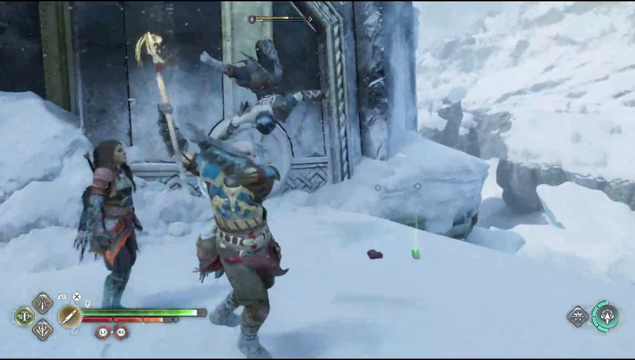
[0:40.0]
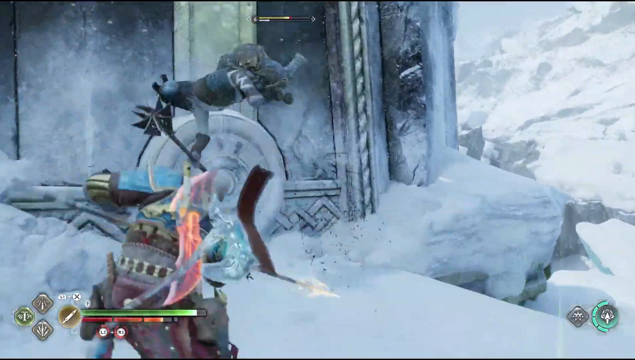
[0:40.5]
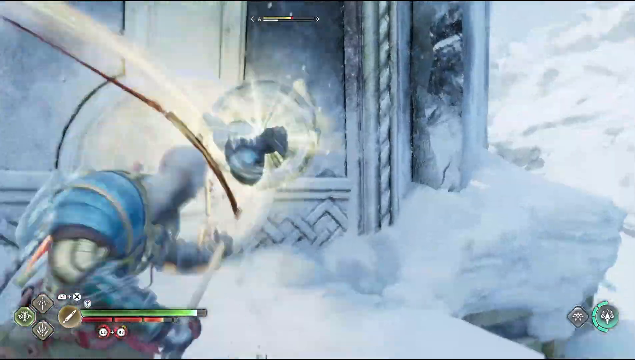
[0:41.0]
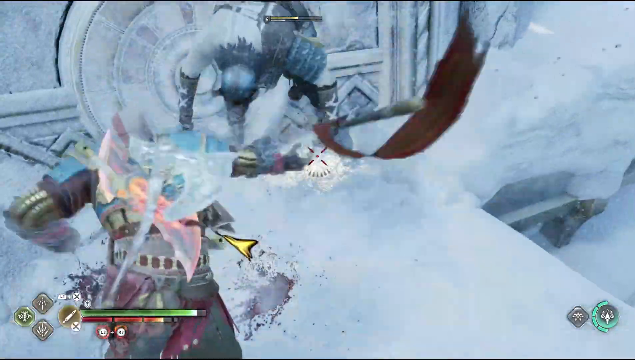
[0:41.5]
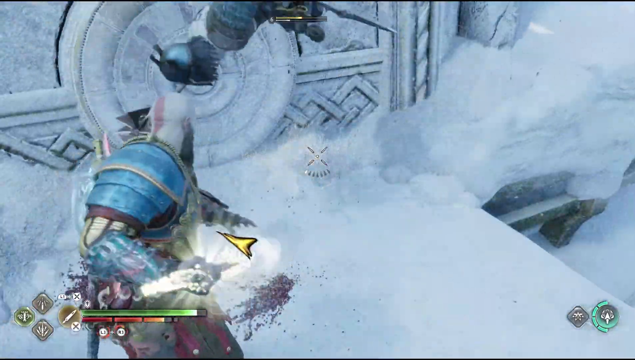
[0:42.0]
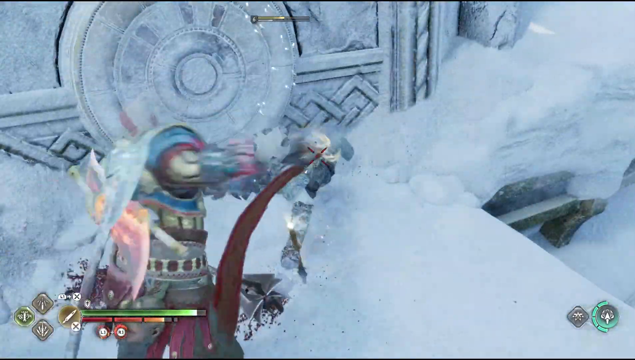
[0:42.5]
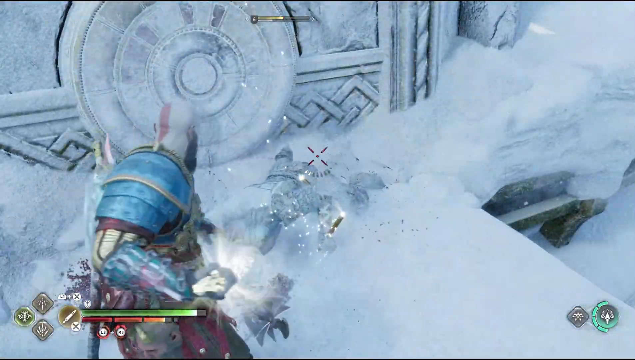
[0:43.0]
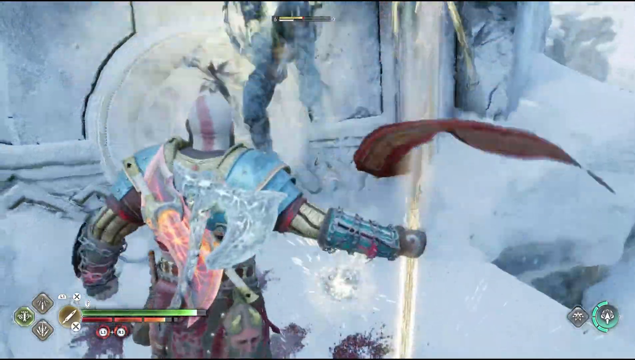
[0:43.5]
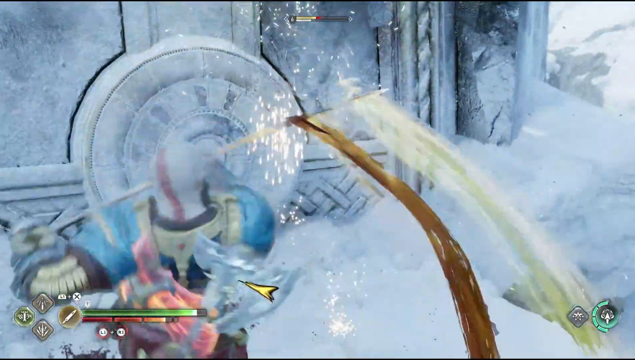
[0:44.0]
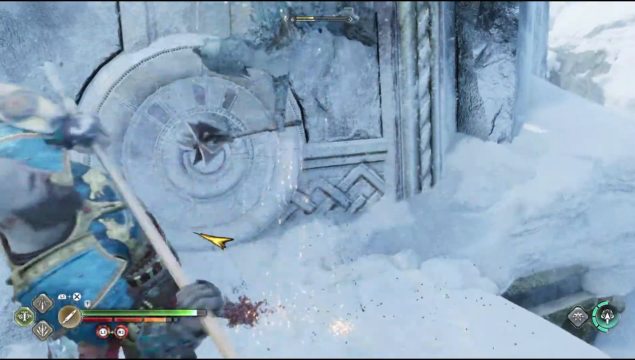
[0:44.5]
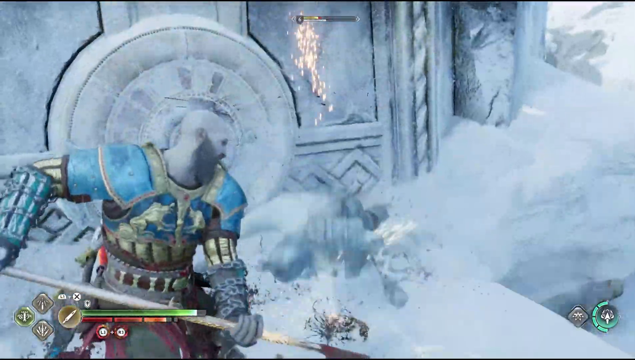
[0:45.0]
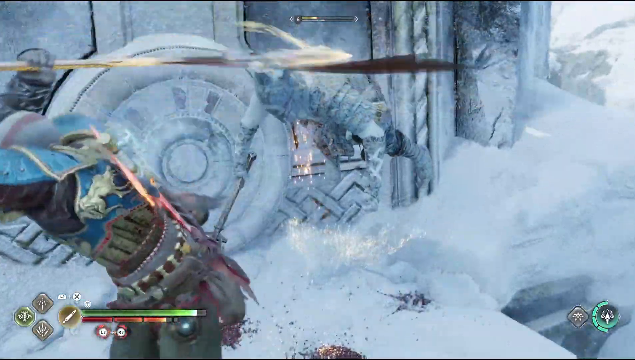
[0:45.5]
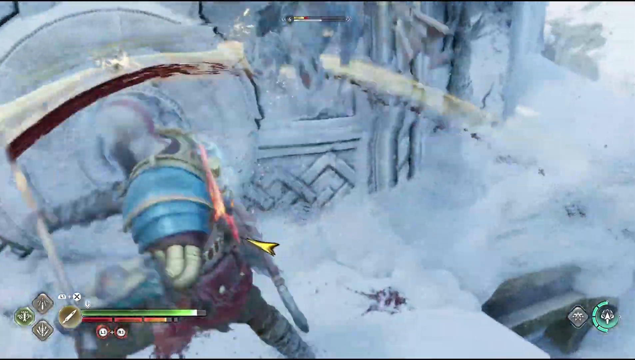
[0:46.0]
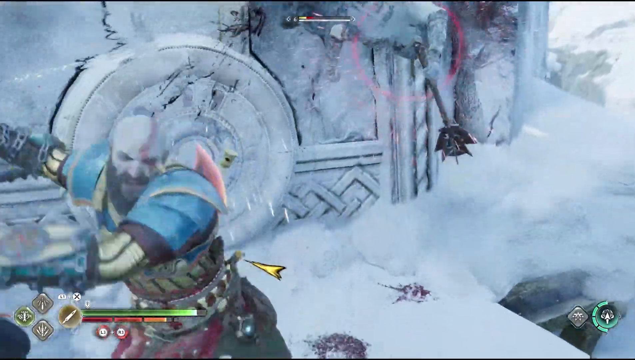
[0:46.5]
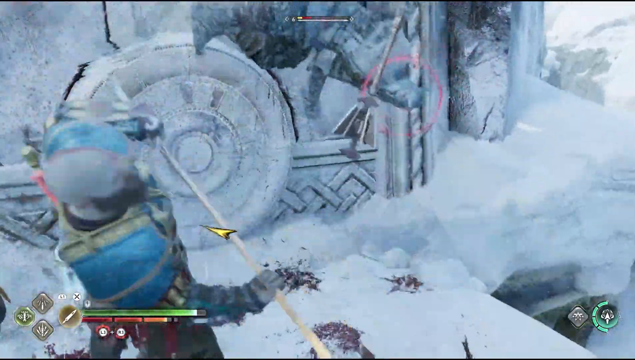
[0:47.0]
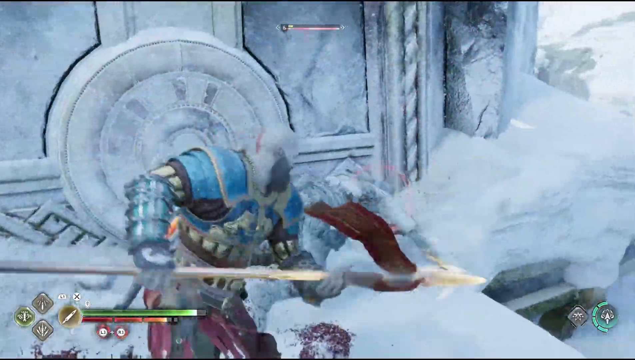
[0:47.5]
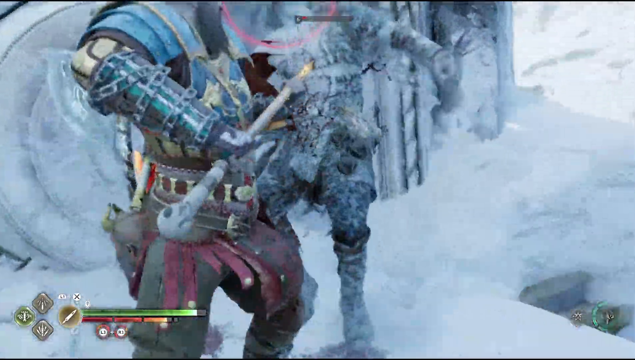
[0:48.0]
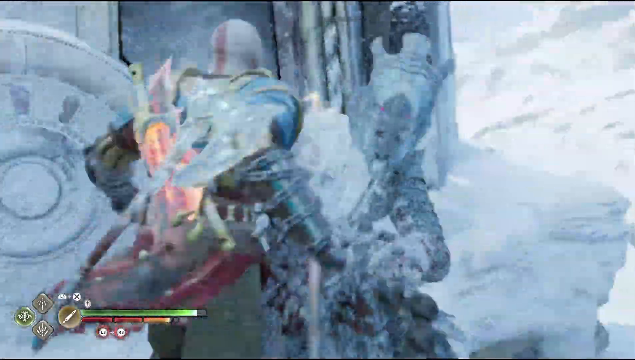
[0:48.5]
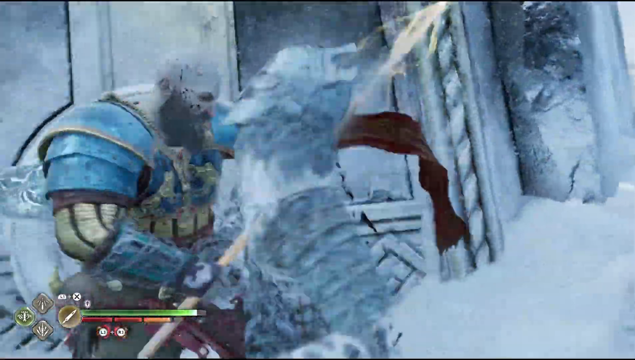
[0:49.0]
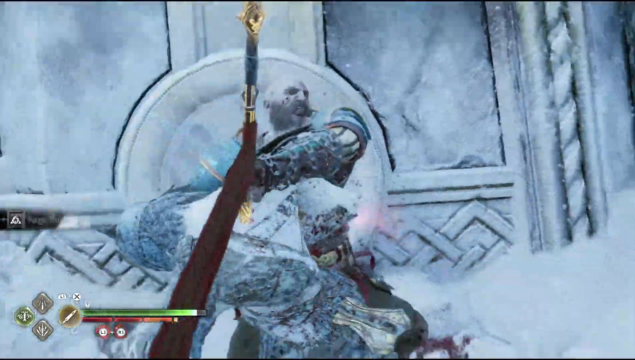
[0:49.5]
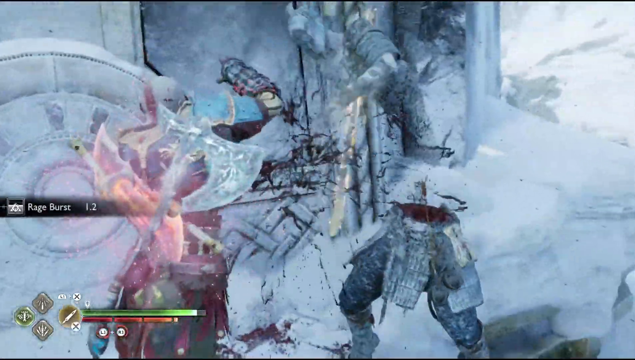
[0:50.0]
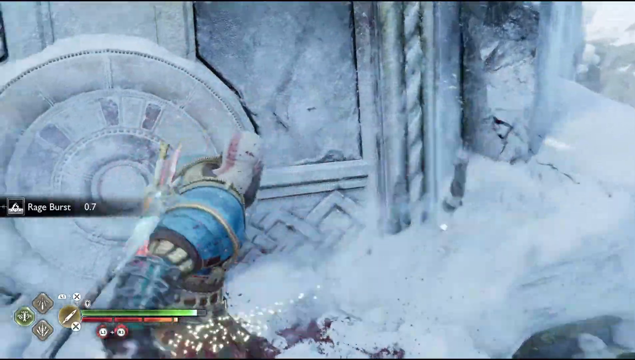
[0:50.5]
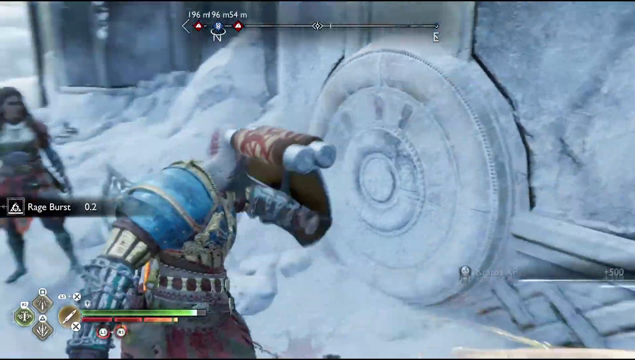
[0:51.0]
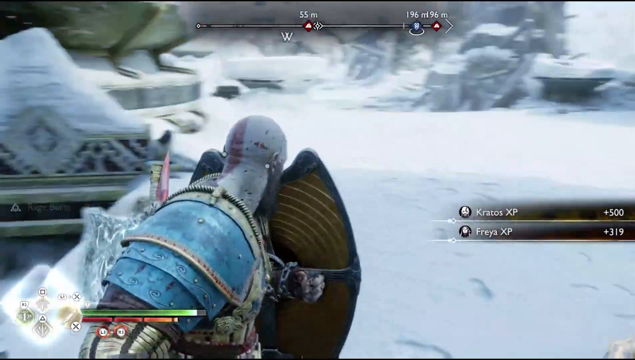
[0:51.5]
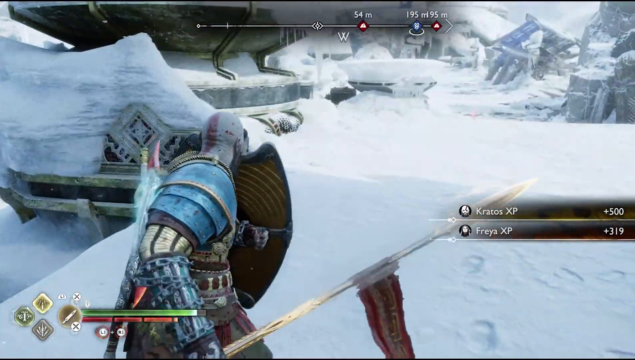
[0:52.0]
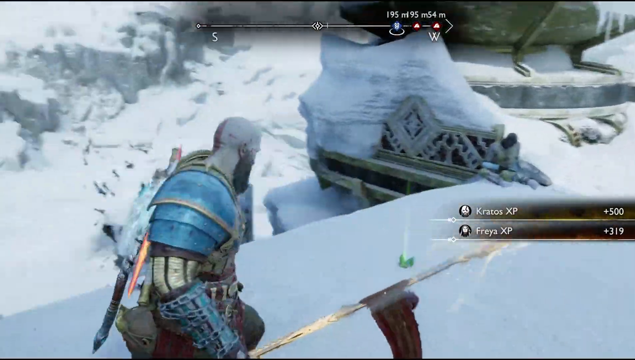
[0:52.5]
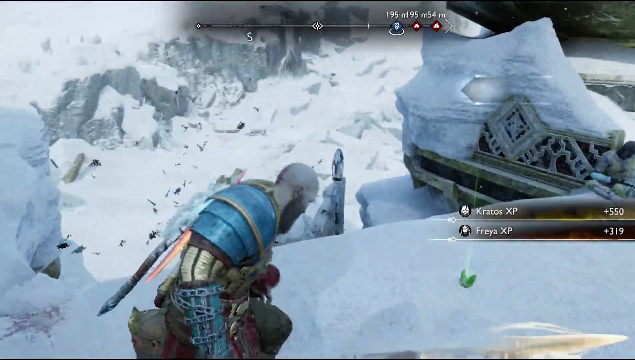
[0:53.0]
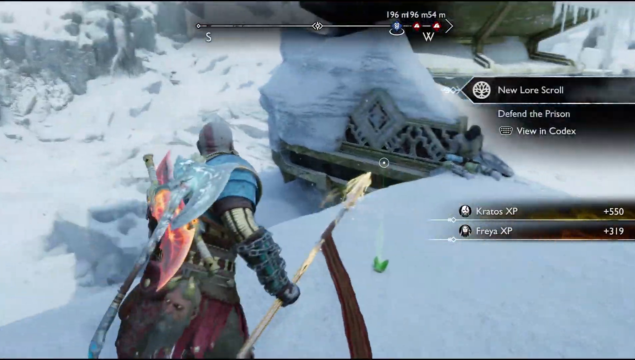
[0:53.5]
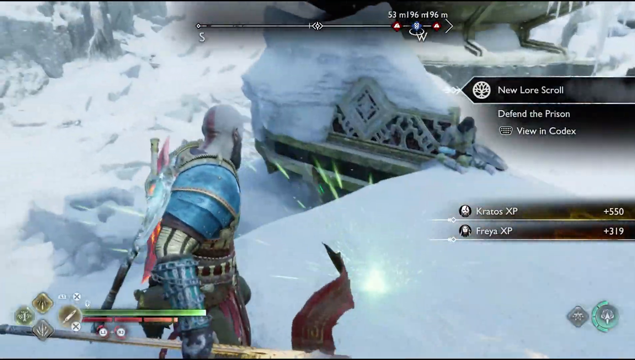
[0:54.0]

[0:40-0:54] A fight goes on in a snowy environment, with lots of icicles hanging down in some areas. Some of the characters do flips and fly through the air. One character with a sword keeps turning and flipping, trying to beat an opponent. Words pop up on the screen, reading "New lore scroll", "Defend the prison" and "View in codex". The screen shows KratosXP at +550 and FreyaXP at +319. The background is mostly white because of the snow.